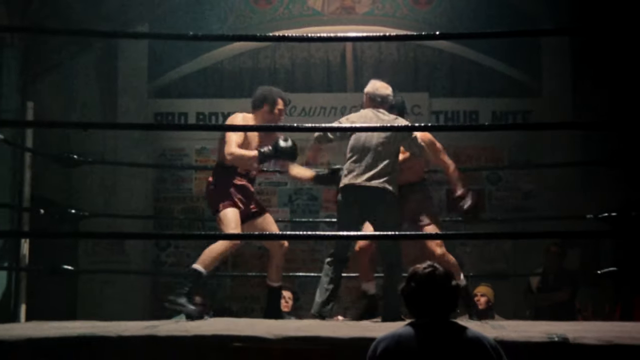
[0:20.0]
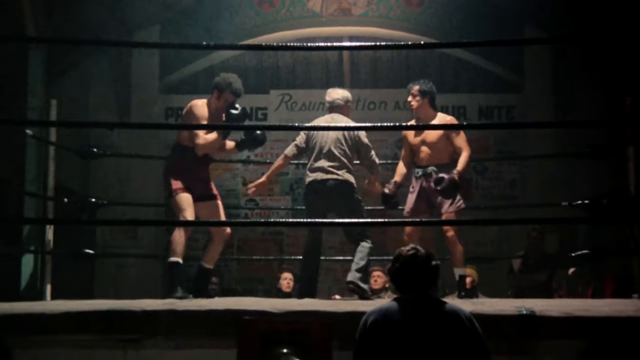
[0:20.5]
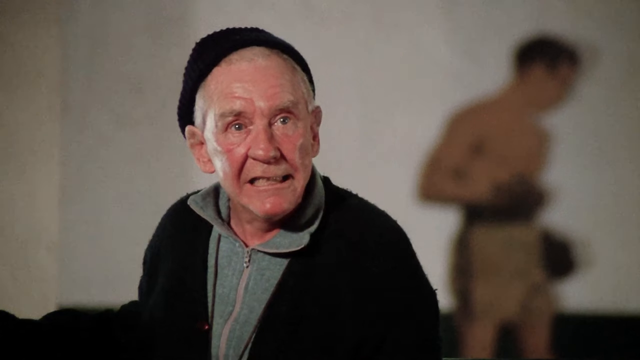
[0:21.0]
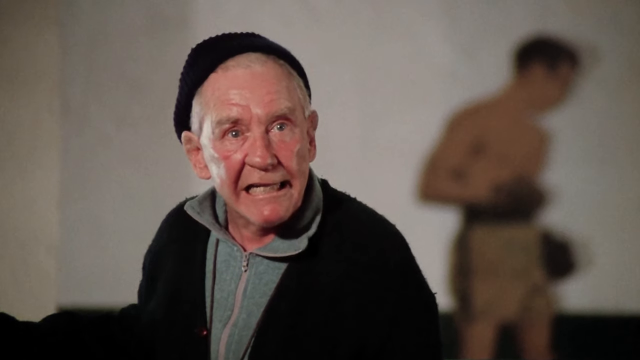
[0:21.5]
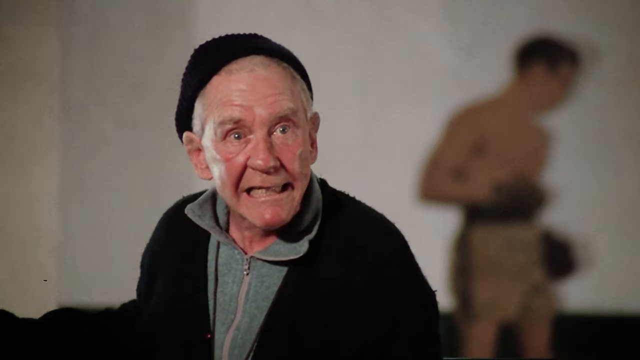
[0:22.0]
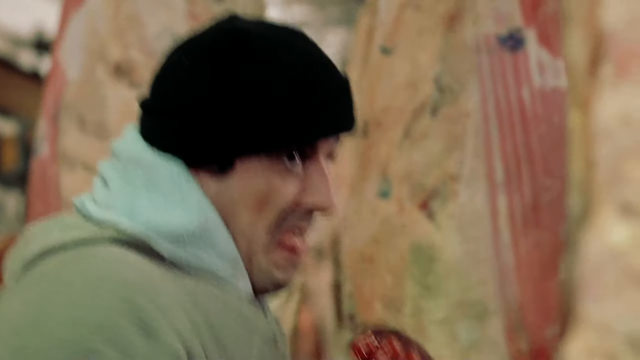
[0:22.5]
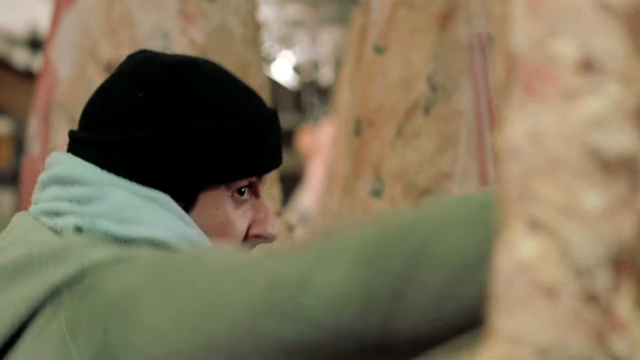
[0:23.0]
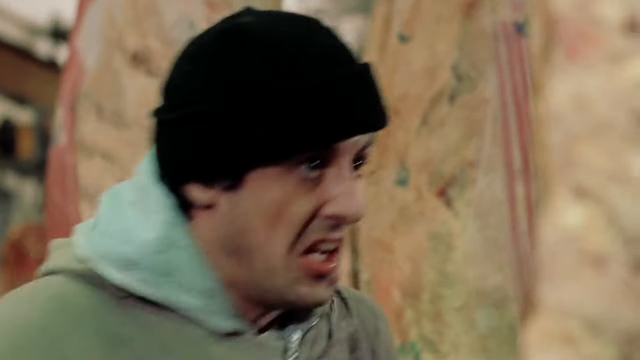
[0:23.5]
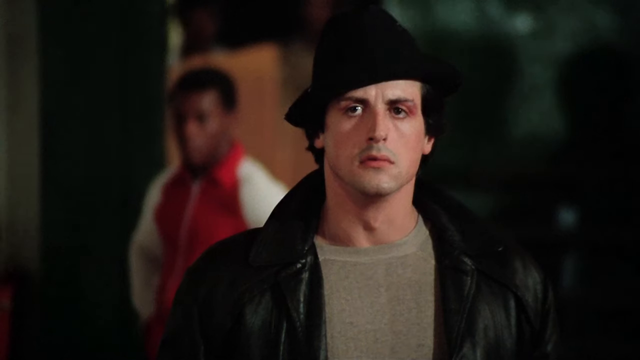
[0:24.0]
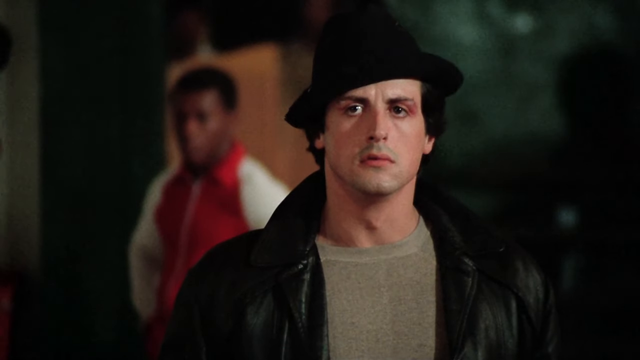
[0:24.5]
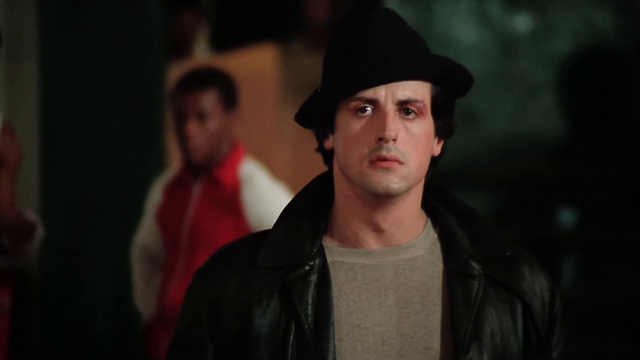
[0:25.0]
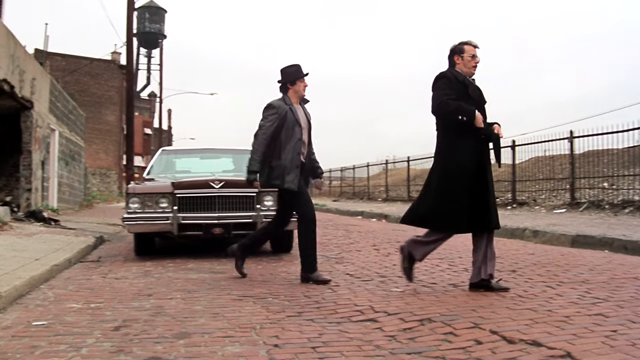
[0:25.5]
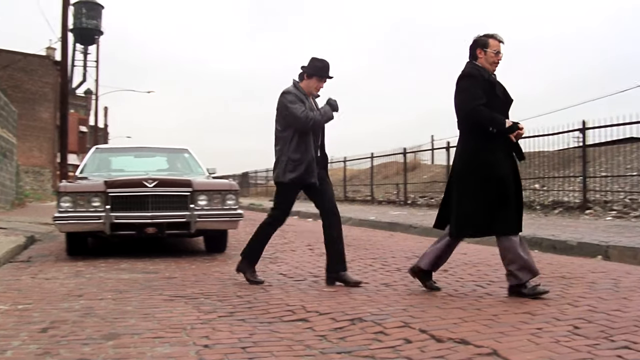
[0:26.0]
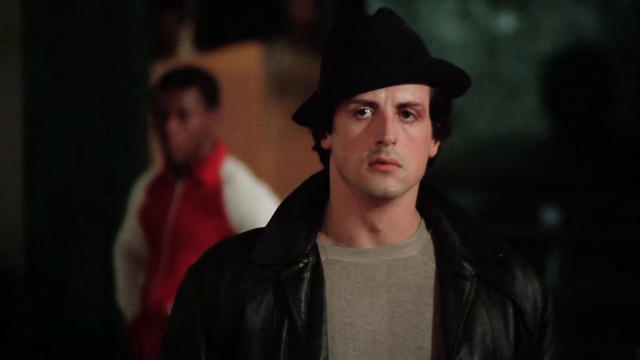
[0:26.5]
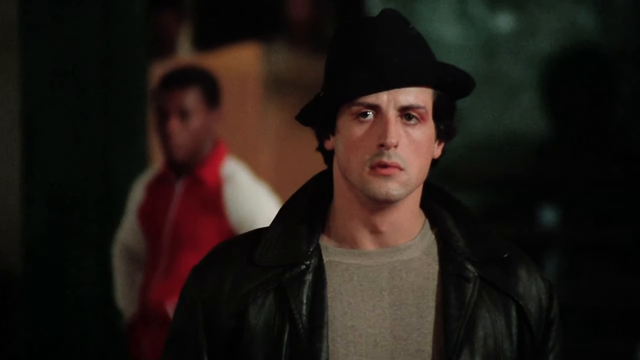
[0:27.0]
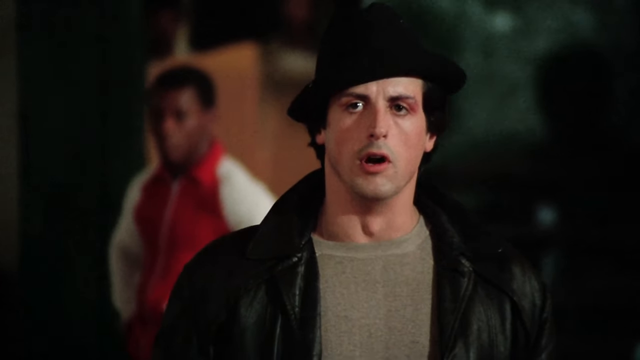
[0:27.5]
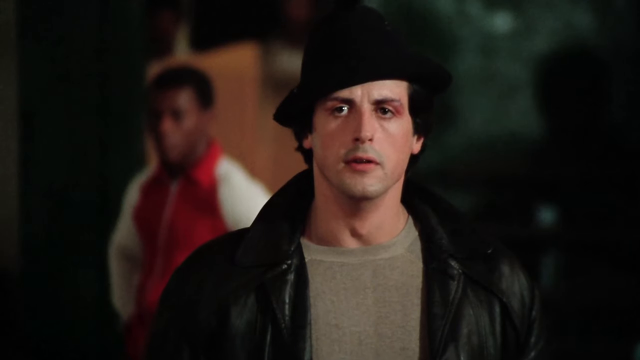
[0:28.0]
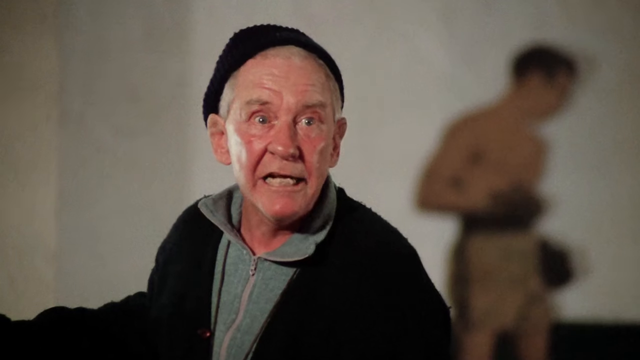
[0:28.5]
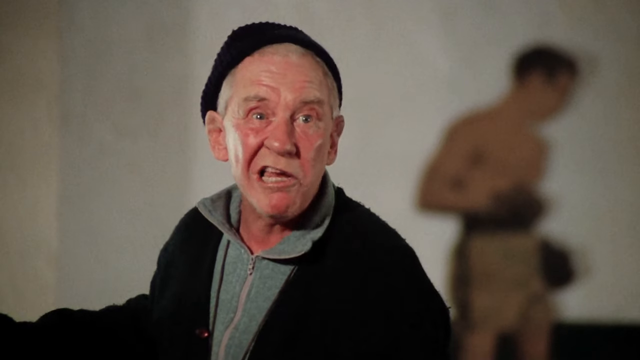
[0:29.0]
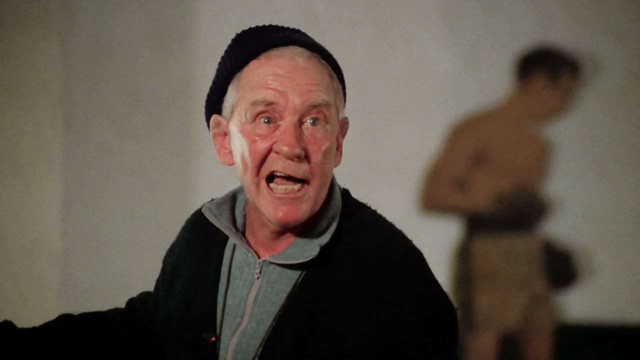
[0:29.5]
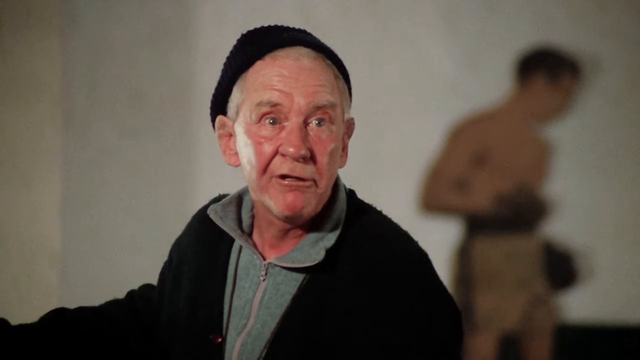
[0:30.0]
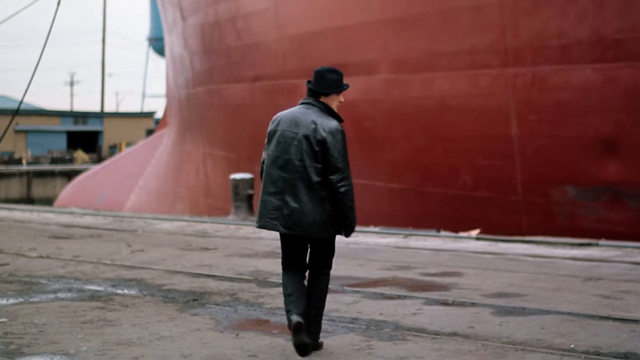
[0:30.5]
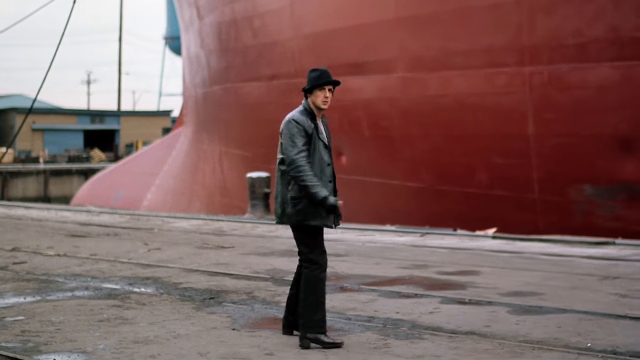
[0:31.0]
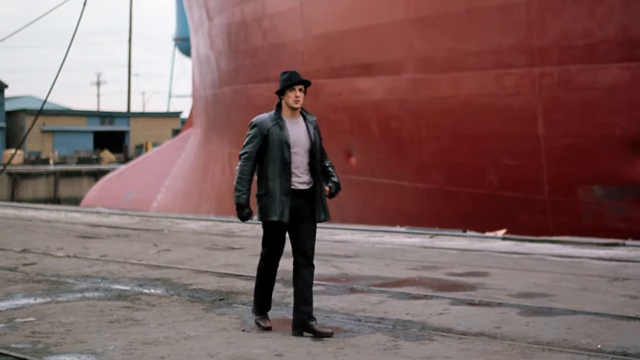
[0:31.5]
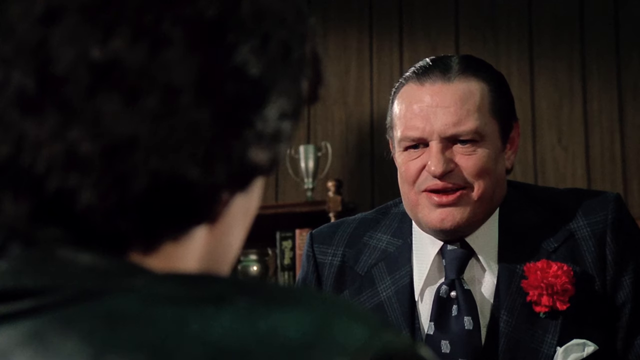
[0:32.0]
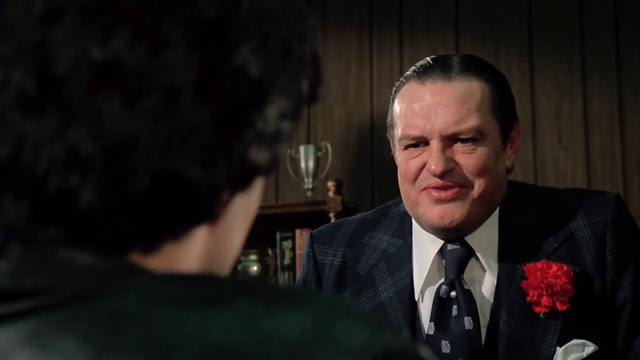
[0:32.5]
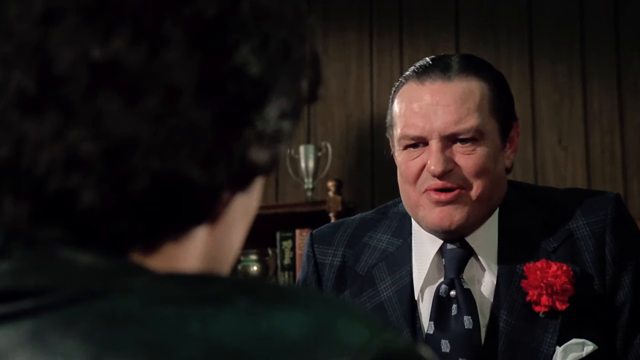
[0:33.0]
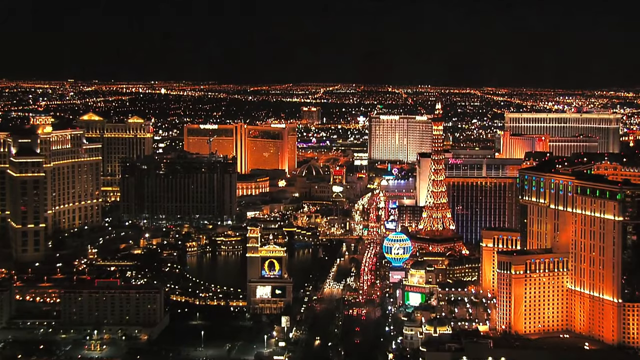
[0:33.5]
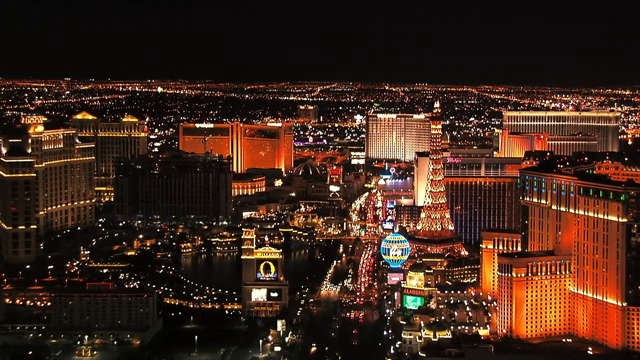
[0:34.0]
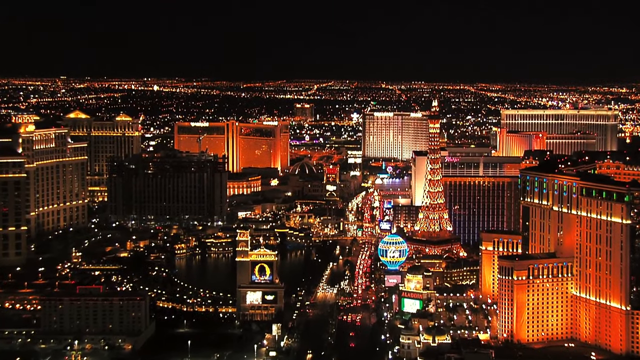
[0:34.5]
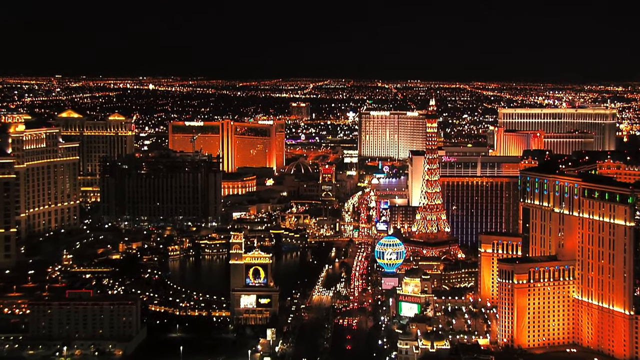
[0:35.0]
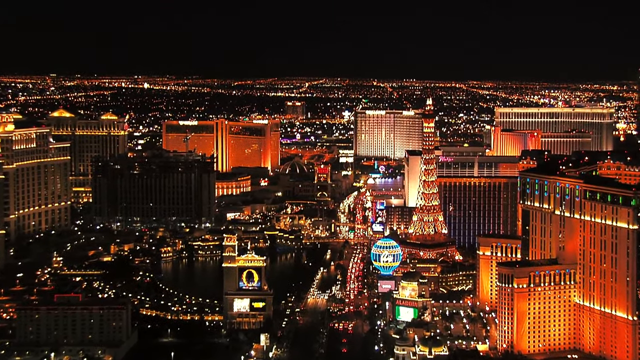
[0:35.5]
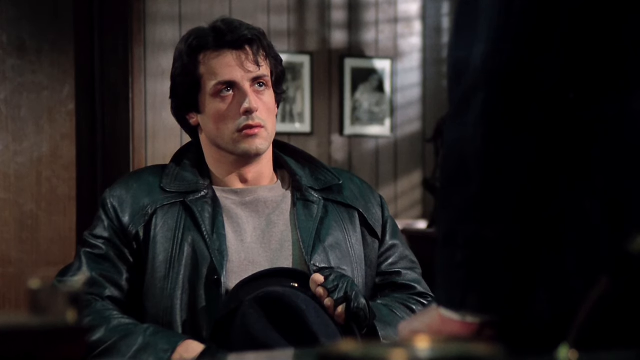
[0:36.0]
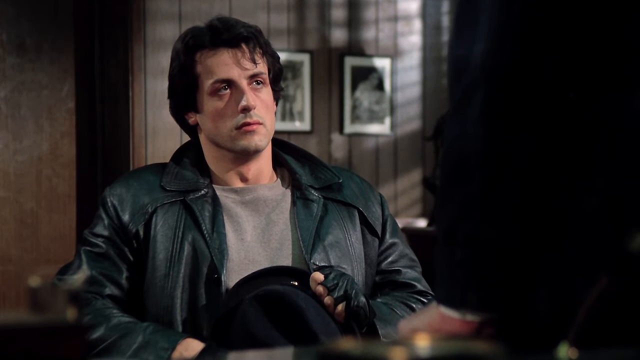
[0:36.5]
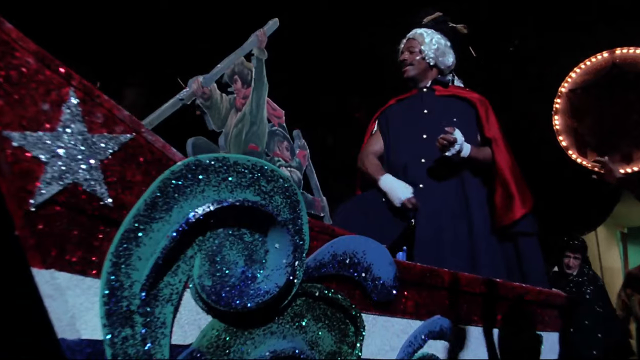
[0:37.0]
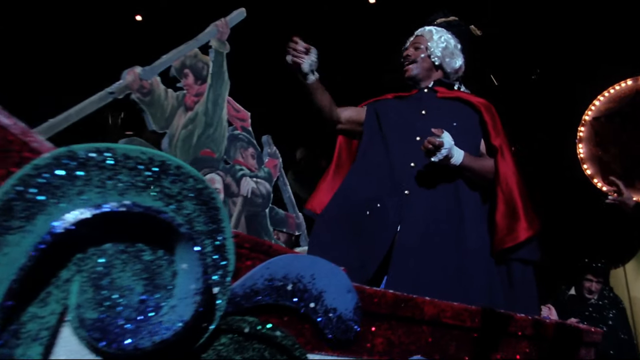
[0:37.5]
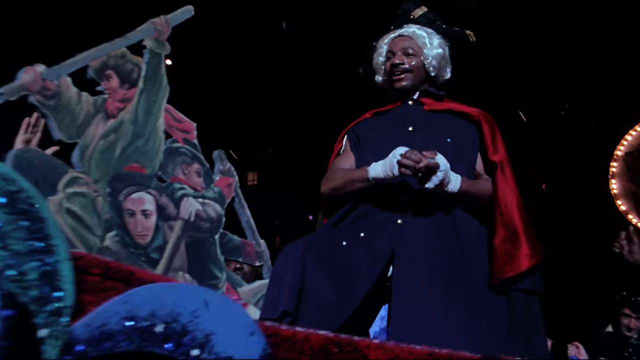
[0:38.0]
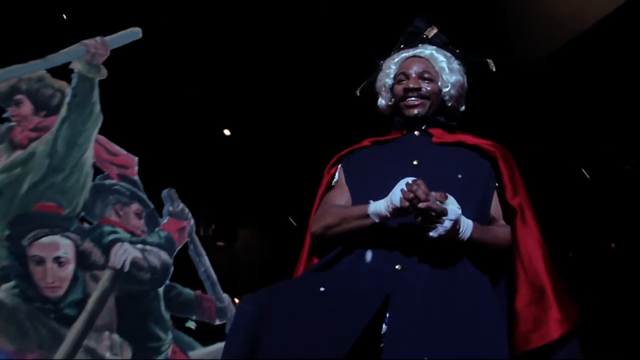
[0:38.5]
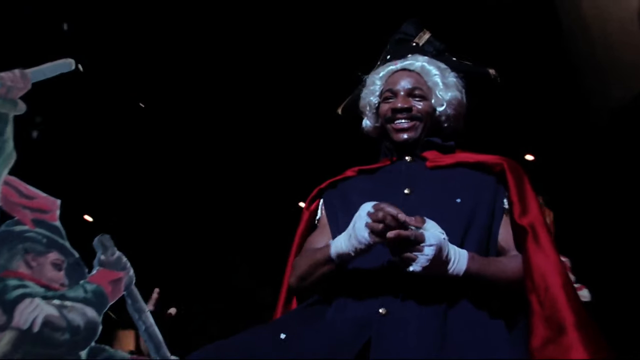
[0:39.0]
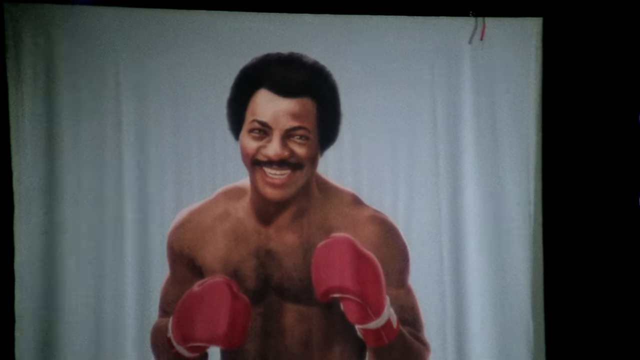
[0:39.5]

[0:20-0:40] Two men in boxing attire fight in a ring at night. A big lamp above them lights only them. A referee, an aged man, tries to control the fight; the men look like they are attacking each other, and the referee comes in and separates them. The scene then shows an old man and shifts to another old man talking, who looks like he is giving instructions. Next, a man, possibly the same one, is in a ring in a gym practising his punches, throwing hard punches at a punching bag. He then talks to an old man and walks away in a cap and a black jacket. The last shot is a picture of a smiling black man with long hair.